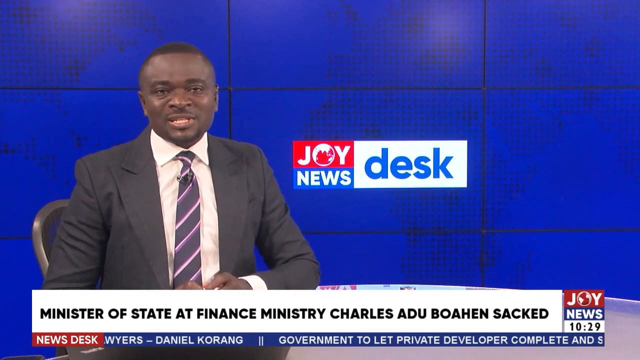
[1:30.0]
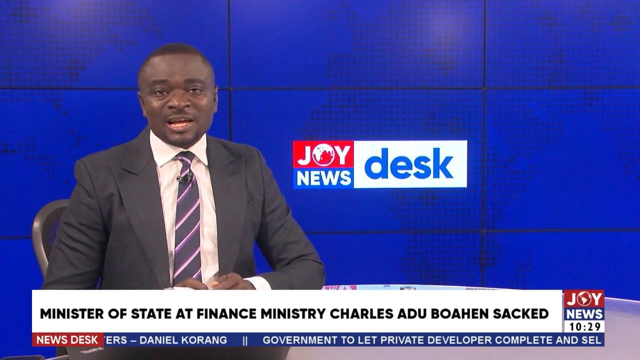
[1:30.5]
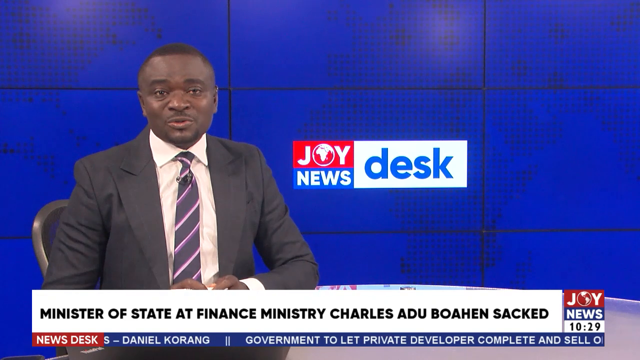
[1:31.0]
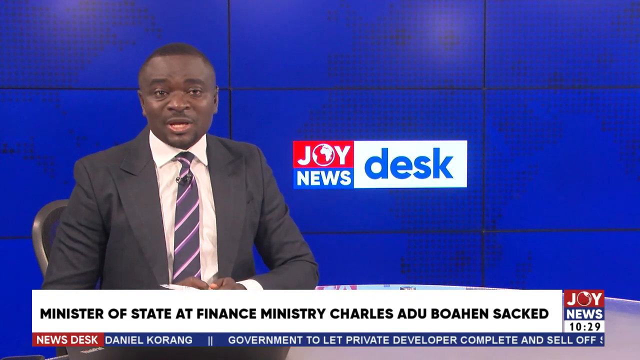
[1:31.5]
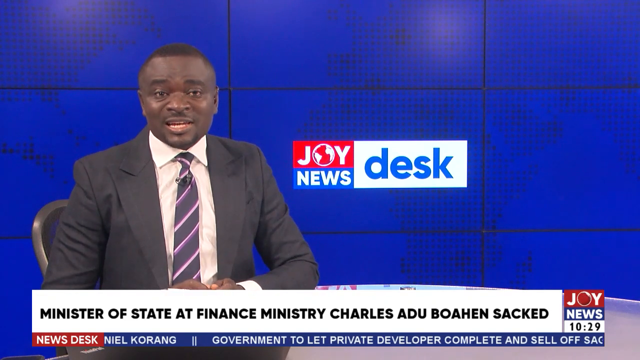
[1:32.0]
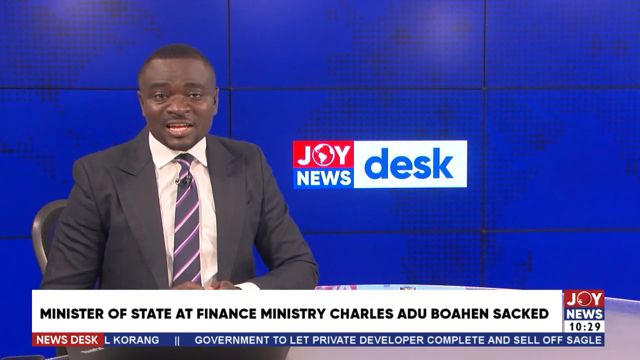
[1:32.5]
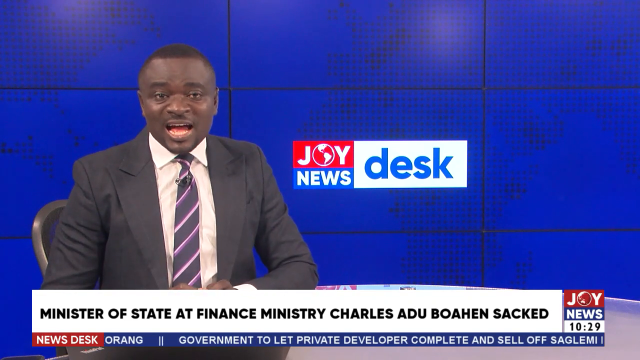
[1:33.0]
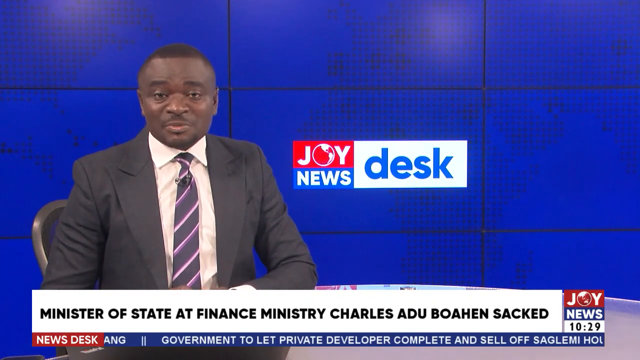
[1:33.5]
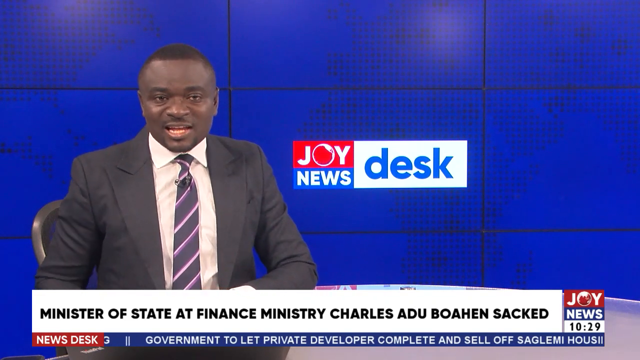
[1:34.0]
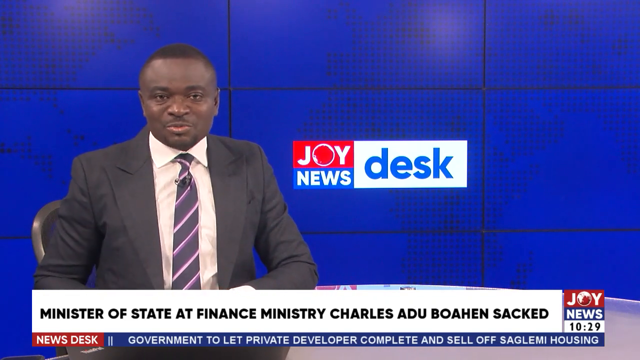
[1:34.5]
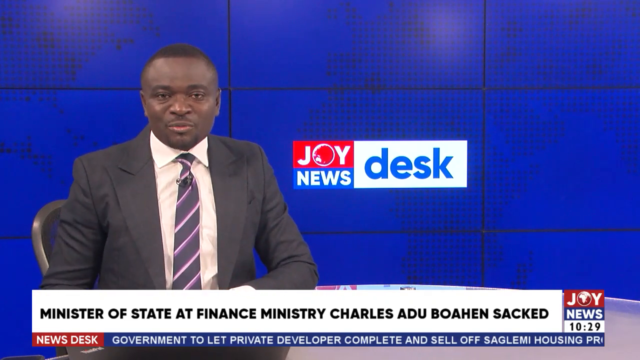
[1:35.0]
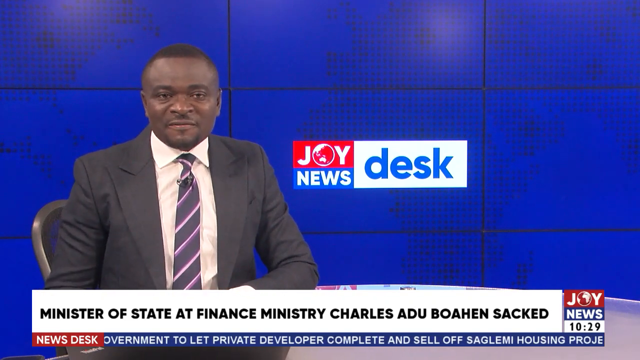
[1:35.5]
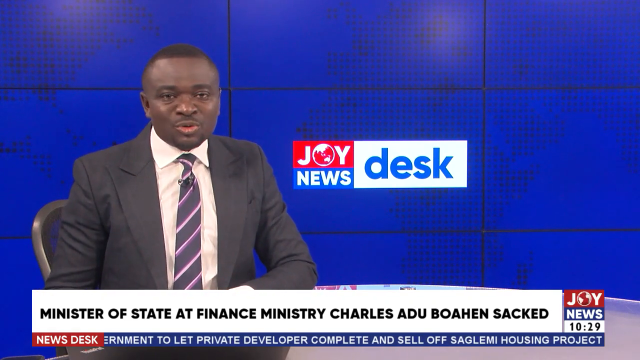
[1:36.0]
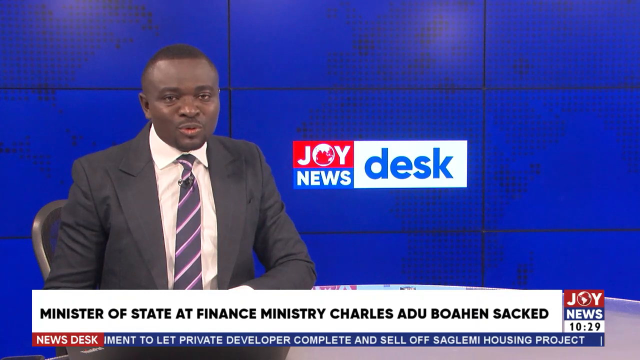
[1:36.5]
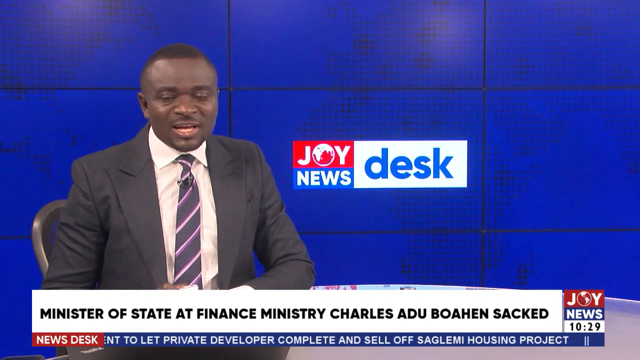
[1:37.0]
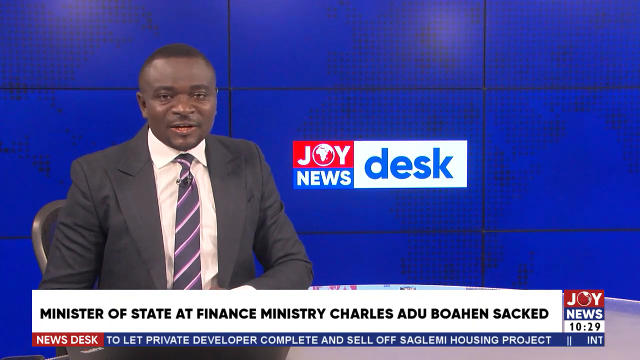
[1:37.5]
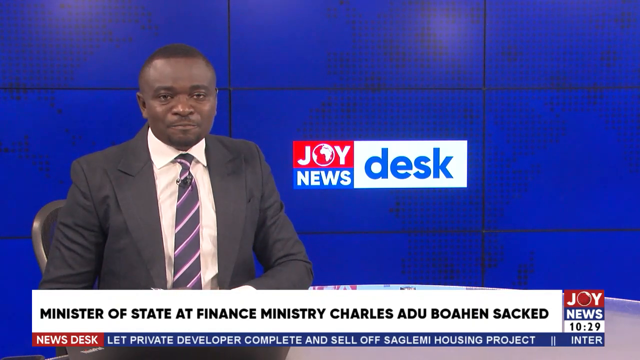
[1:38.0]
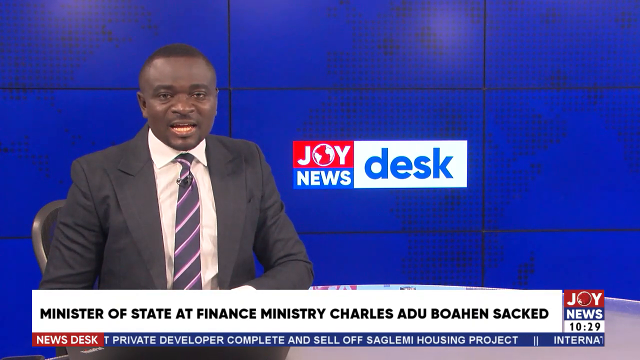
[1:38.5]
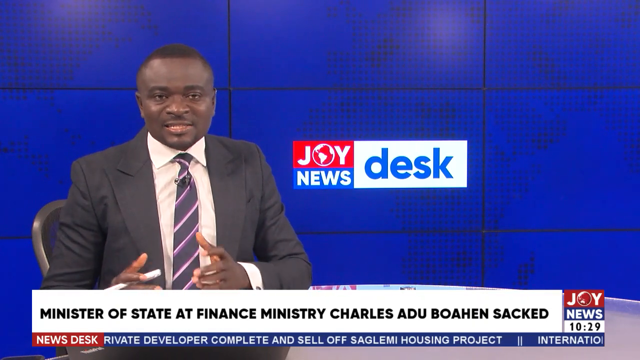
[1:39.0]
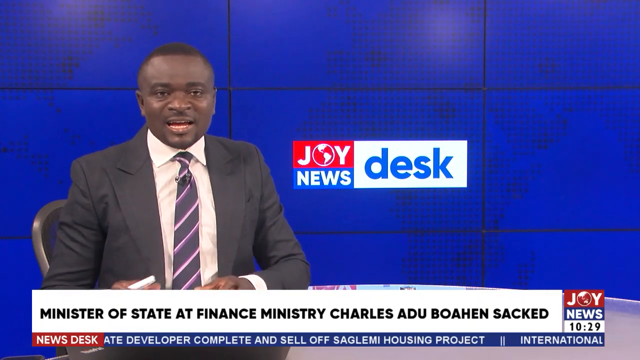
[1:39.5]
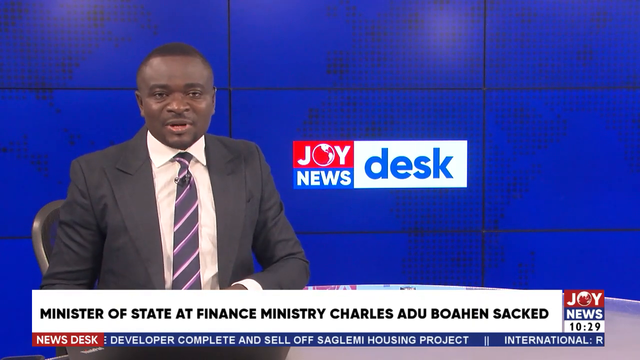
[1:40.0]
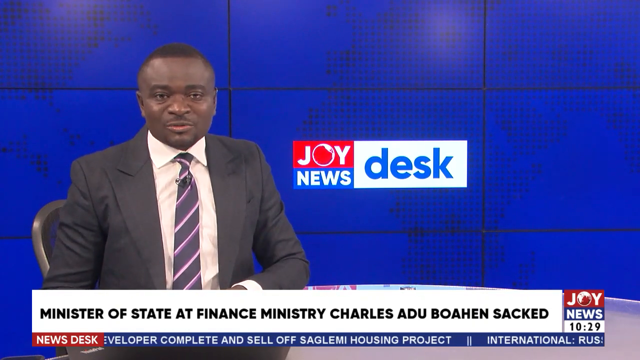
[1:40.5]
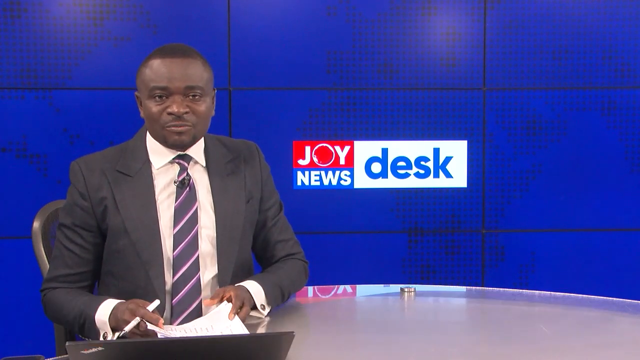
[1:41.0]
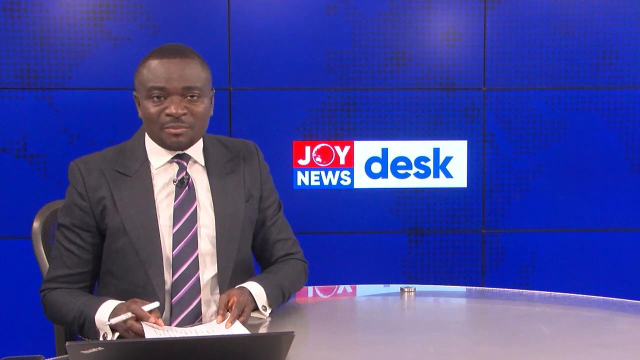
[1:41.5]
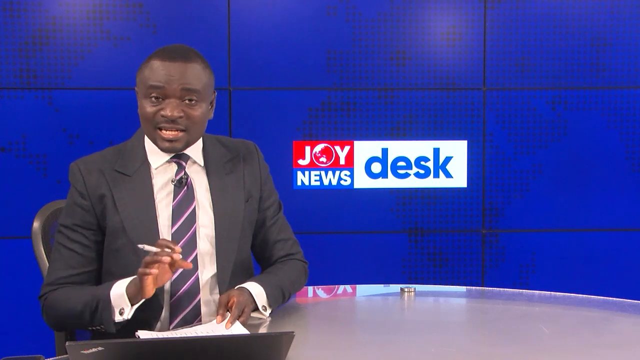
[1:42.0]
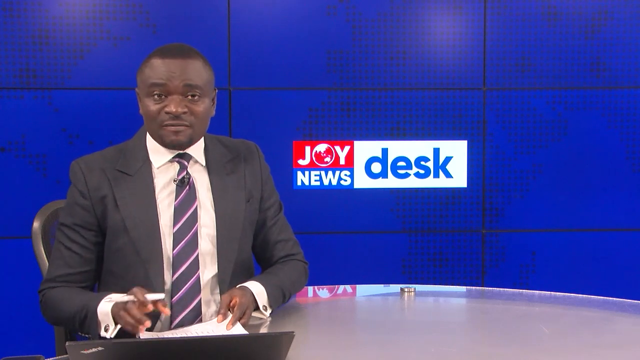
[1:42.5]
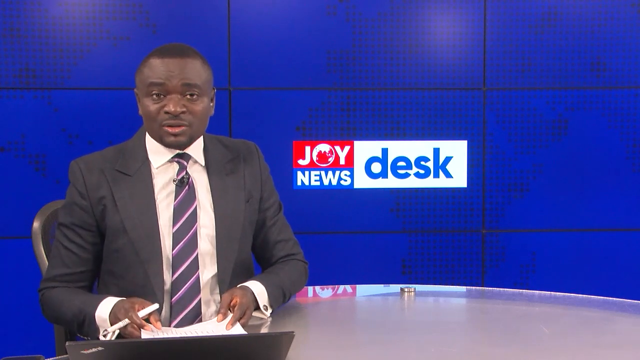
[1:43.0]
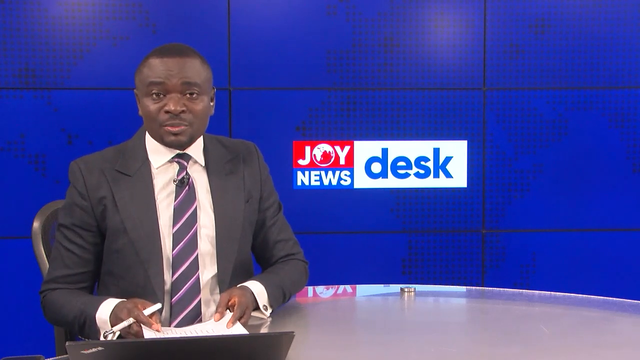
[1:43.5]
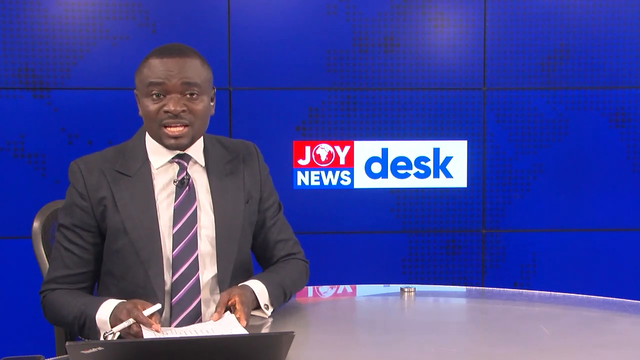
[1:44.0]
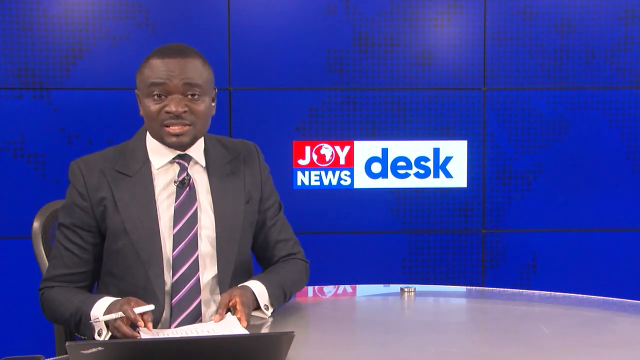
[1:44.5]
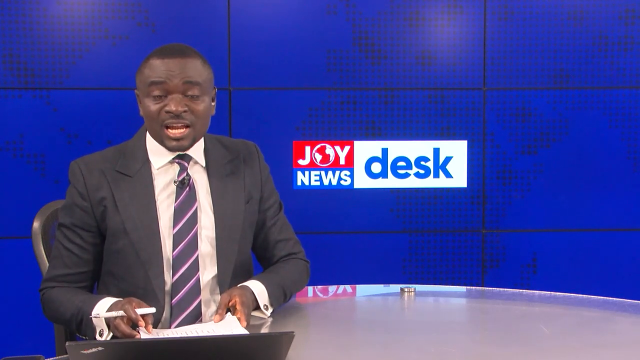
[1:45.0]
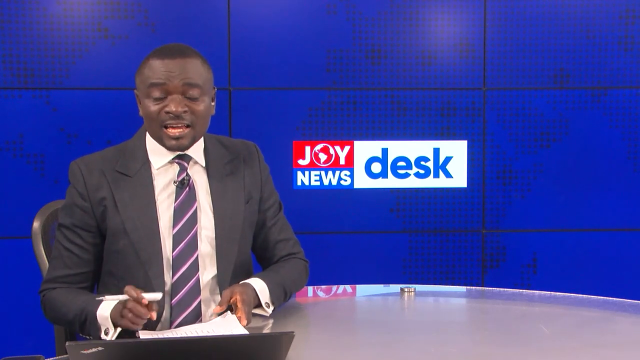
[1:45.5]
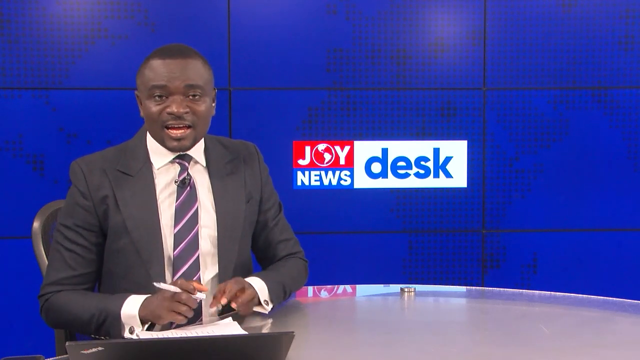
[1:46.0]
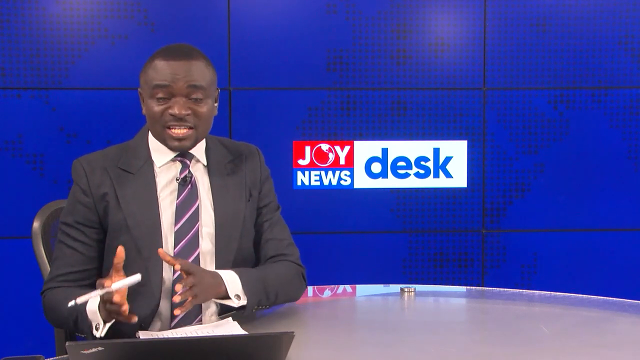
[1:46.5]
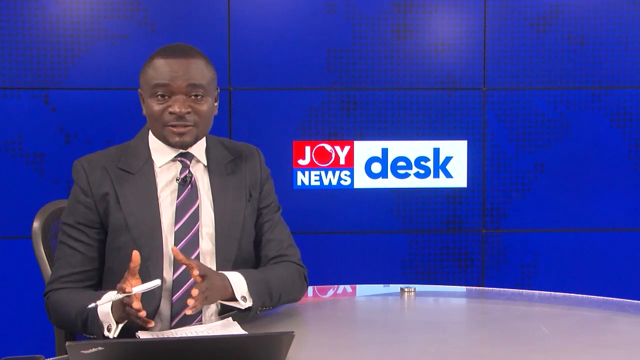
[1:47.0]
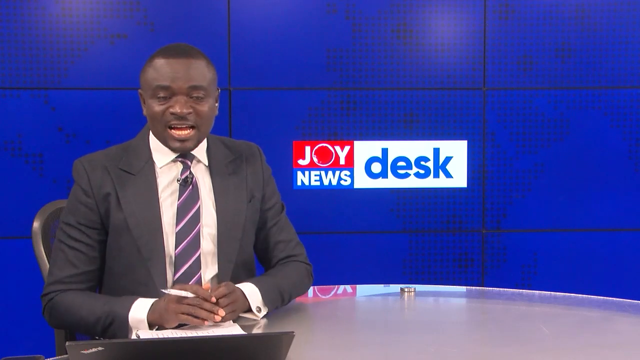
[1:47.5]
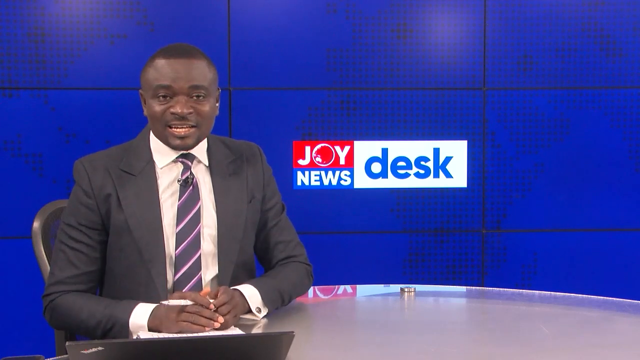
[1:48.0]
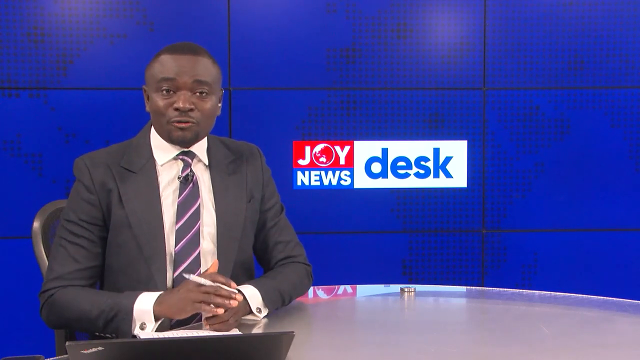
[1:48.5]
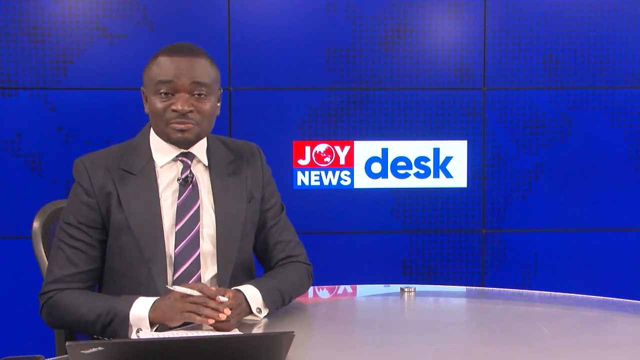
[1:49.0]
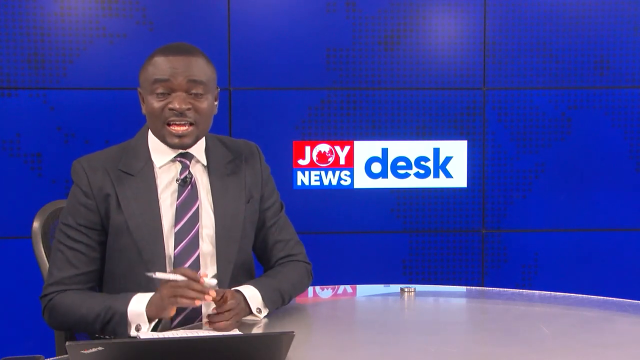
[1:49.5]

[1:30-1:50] The newscaster is seated at his news desk, talking and gesturing. He gestures with the white pen in his right hand, and both hands gesture and hold the paper from time to time. A laptop is in front of him, and the desk appears to be white. The screen still flashes the headline "Minister of State at Finance Ministry, Charles Adu Boahen, sacked," with the Joy News Desk emblem in the right-hand corner. He is seated in a shiny gray chair, and behind him is the blue screen with continents made of pixelated black squares in the shape of the United States or Africa, Europe and Great Britain. He wears a gray suit jacket, a white shirt and a purple-striped tie on a navy blue, or maybe gray, background, with a microphone clipped to his tie.